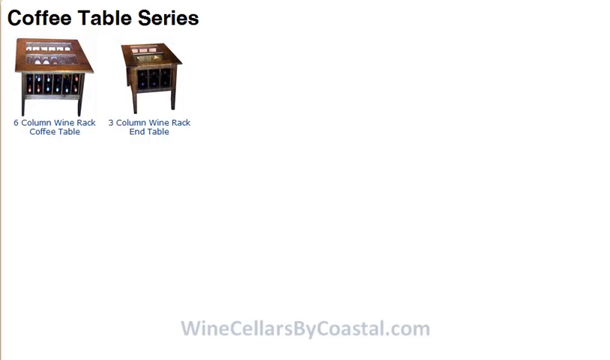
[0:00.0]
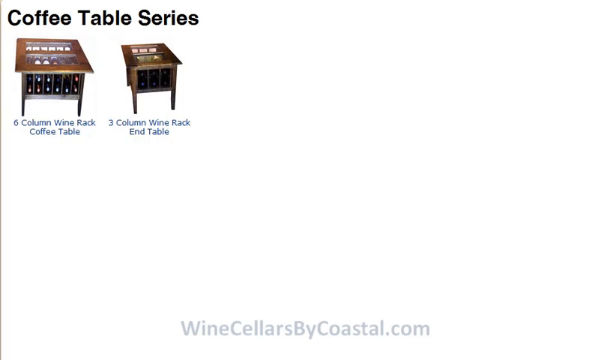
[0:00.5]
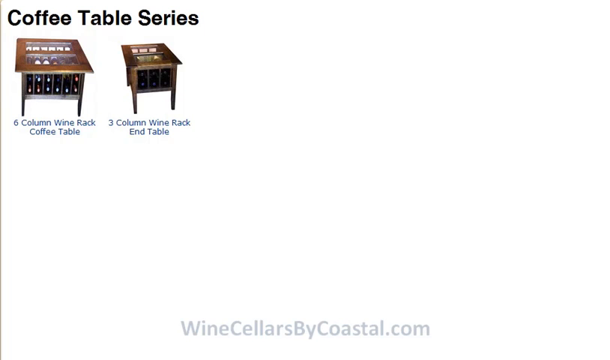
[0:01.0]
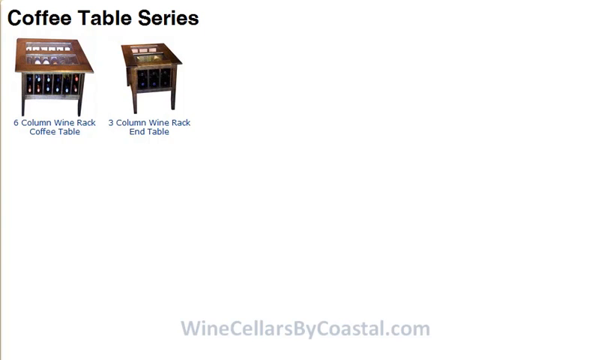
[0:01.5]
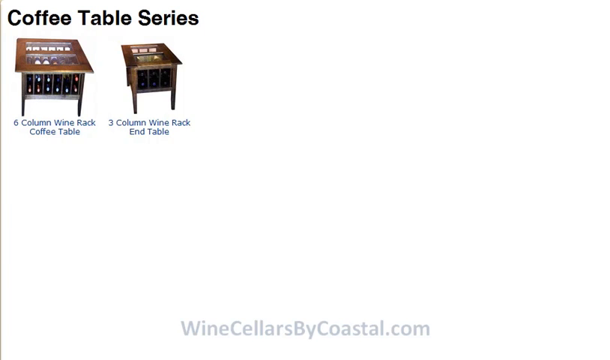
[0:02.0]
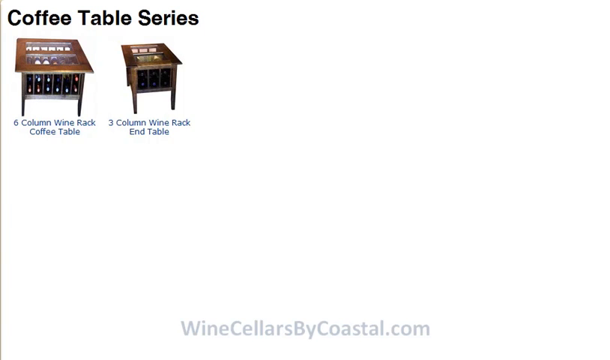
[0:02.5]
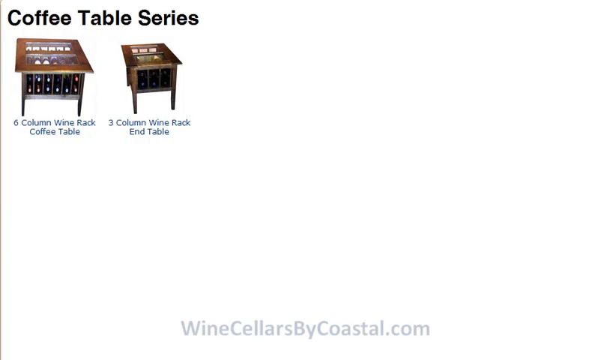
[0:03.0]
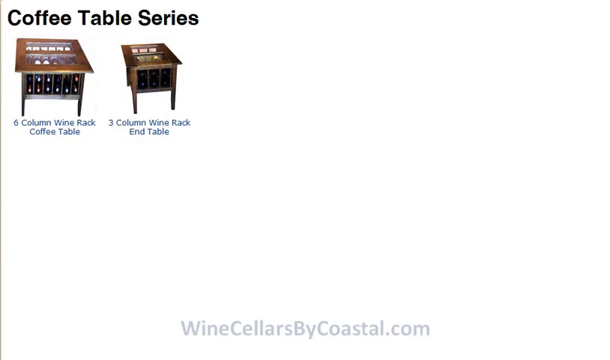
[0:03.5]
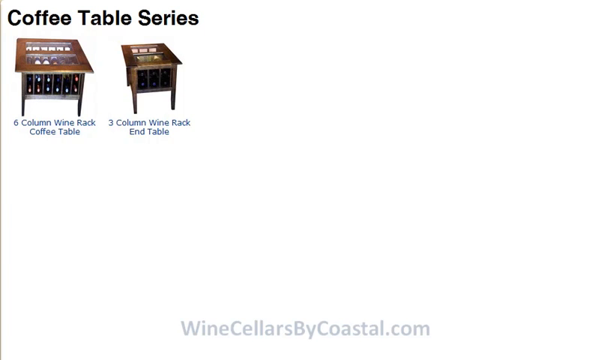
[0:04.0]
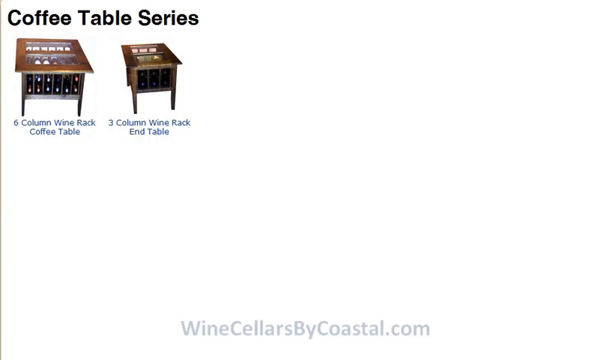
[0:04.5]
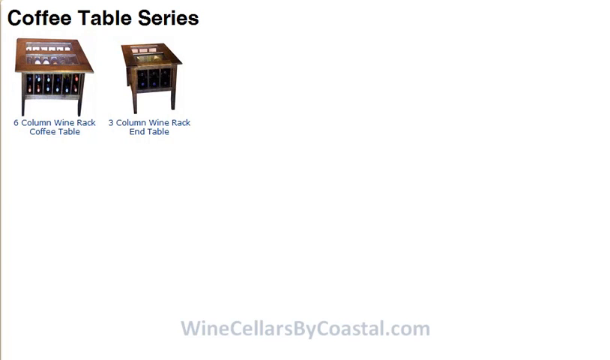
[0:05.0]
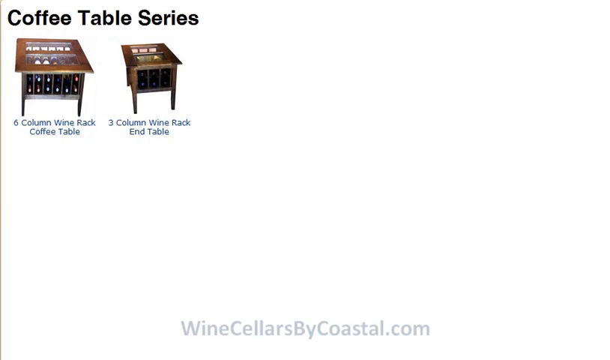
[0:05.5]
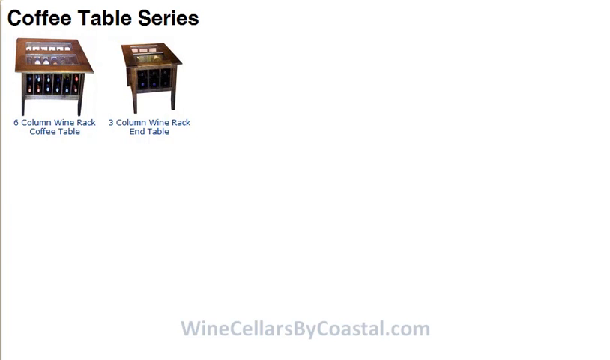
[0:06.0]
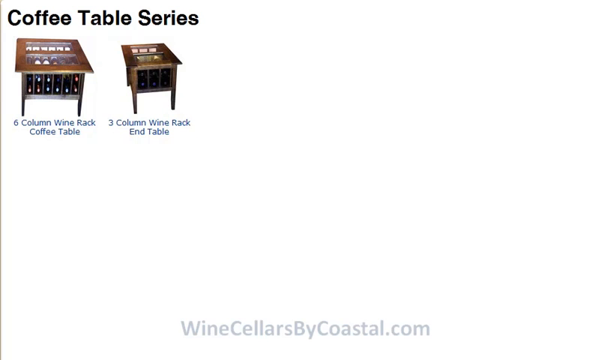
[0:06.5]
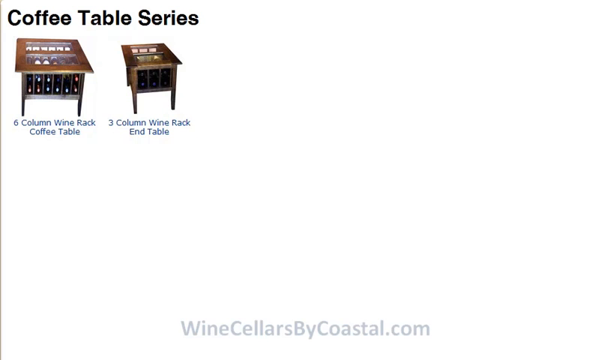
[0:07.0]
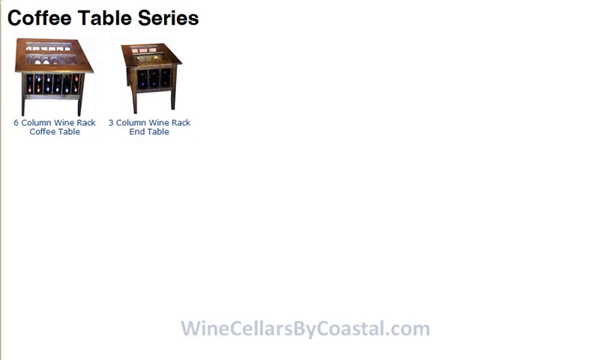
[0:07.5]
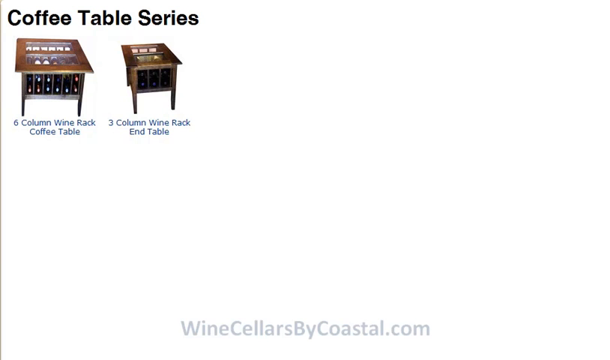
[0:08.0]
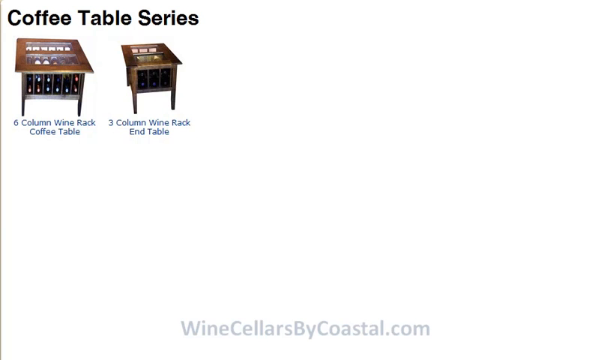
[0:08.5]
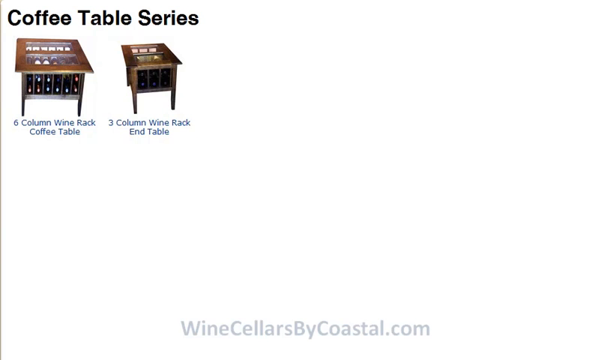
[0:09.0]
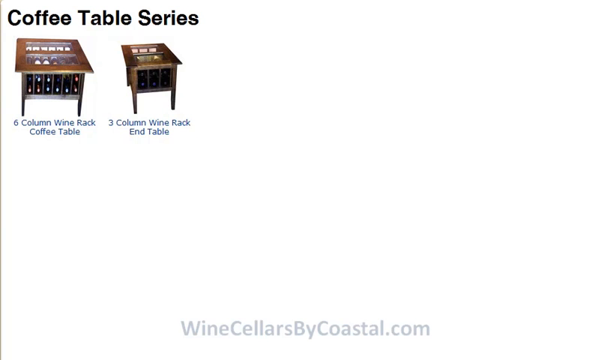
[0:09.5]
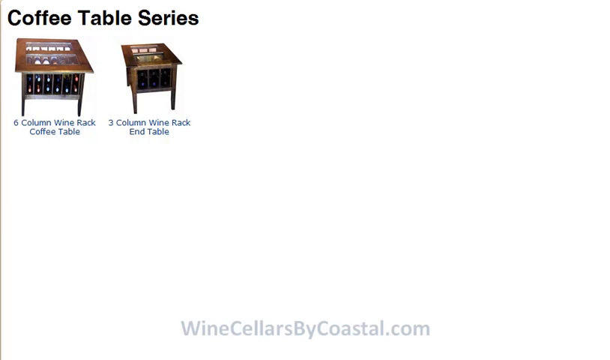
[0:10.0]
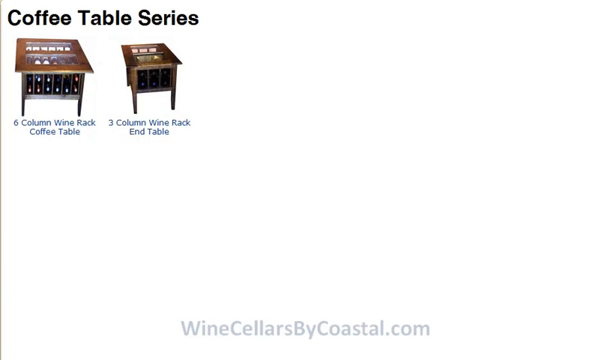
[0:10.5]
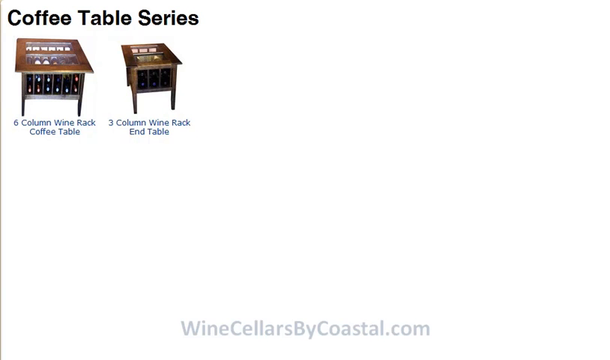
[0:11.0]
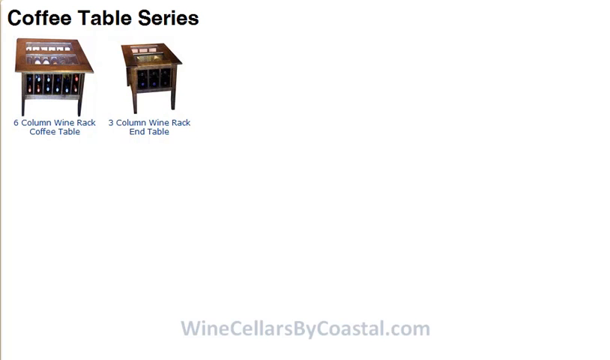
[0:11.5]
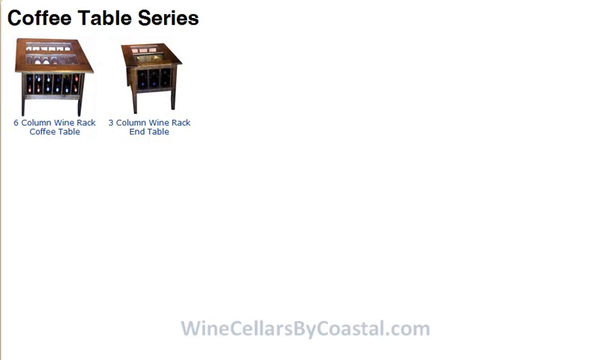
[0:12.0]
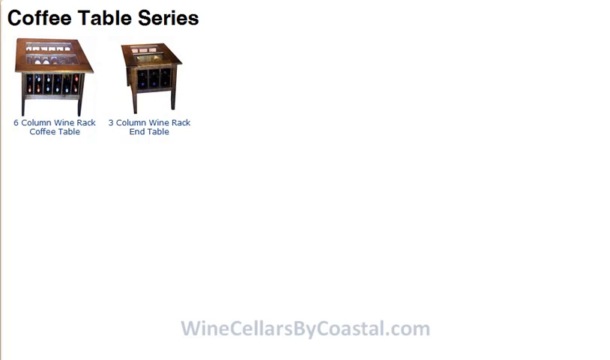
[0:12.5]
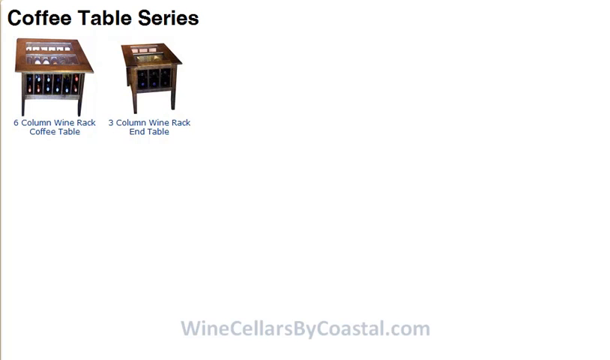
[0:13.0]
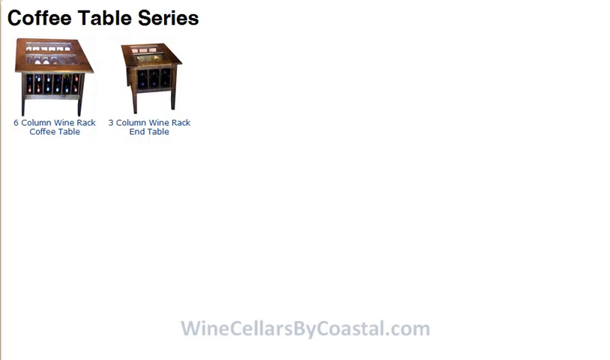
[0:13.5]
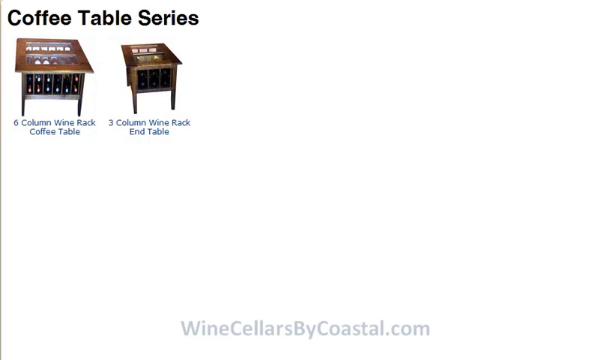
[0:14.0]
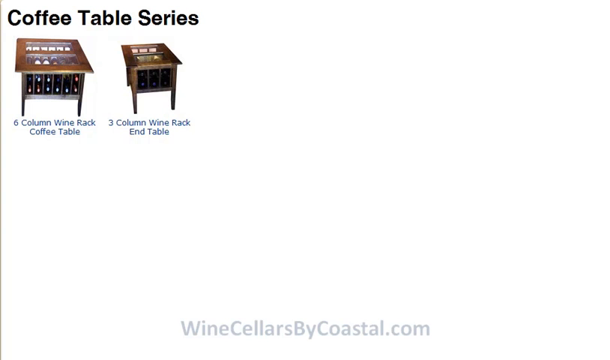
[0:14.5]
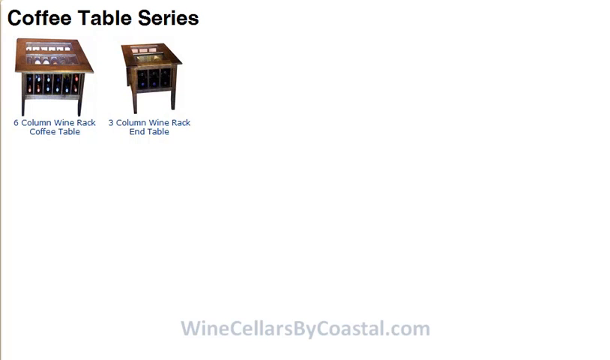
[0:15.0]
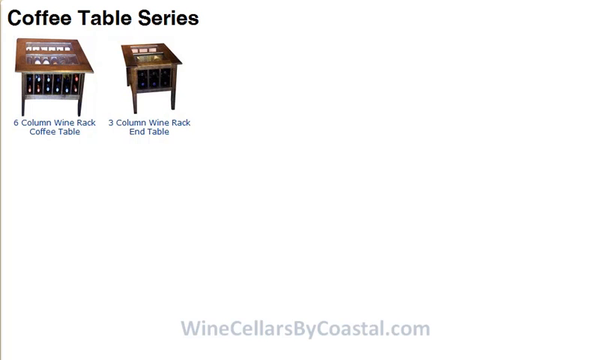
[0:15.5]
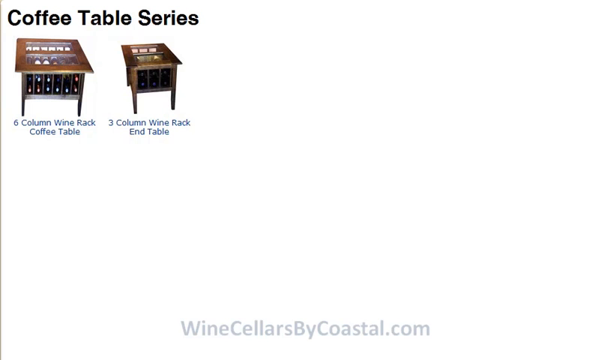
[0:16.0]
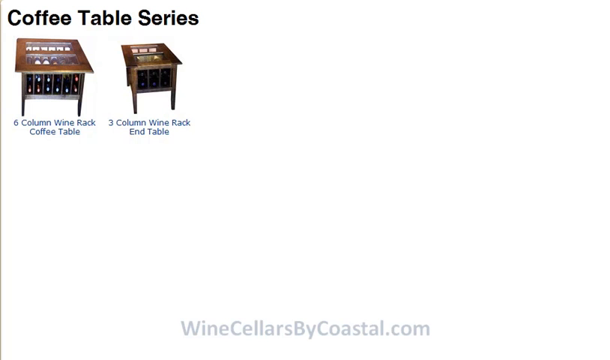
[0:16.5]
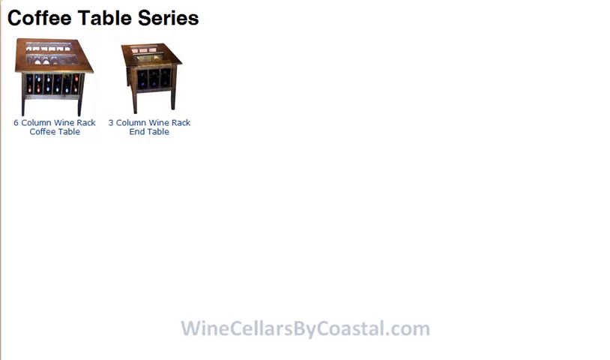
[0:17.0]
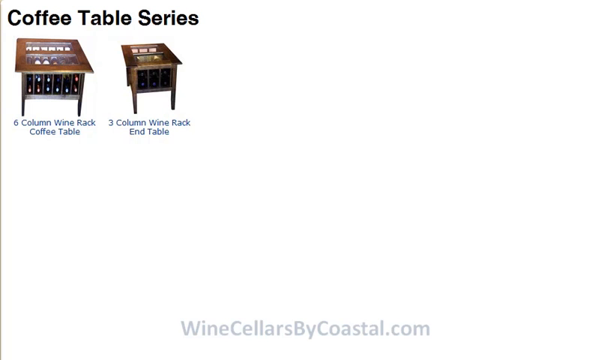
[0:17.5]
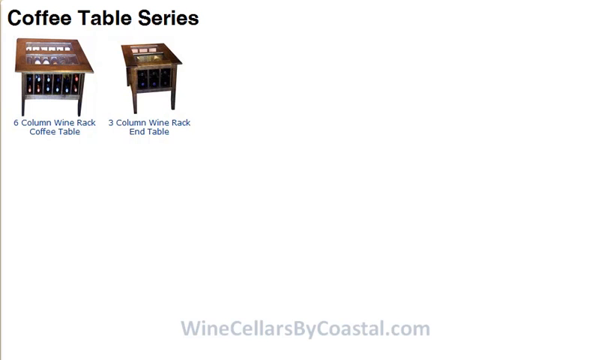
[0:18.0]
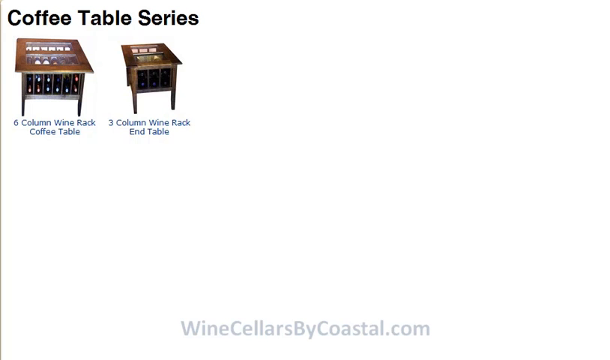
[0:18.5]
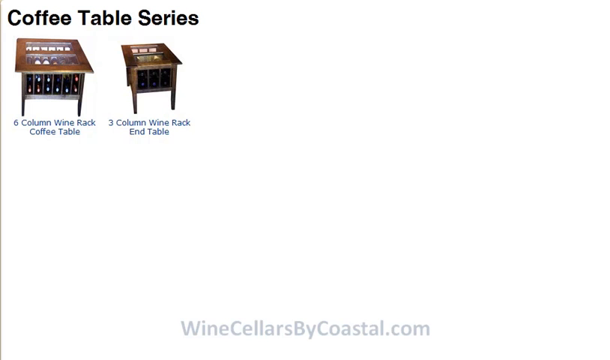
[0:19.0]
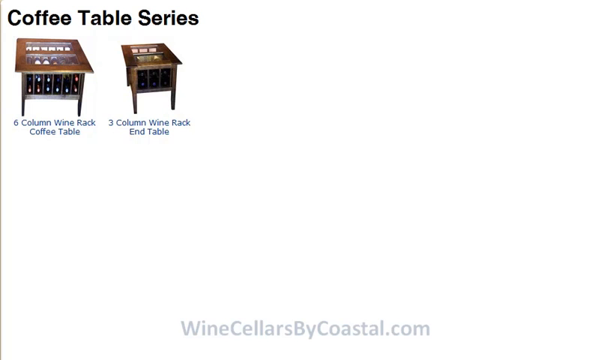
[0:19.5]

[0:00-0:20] A page with a completely white background appears, with "Coffee Table Series" in large, bold black font toward the top left corner. Two coffee tables are listed underneath the heading. The first is a six column wine rack coffee table, shown in a picture of a brown rectangular coffee table with two glass panels on top and a 6 column wine rack underneath, with a few wine bottles inside the rack. To the right of it is the three column wine rack end table, a similar brown wooden coffee table with two glass panels on top and a 3 column wine rack underneath; this table is a bit smaller and has fewer columns. At the bottom of the screen, gray text reads "winecellarsbycoastal.com".